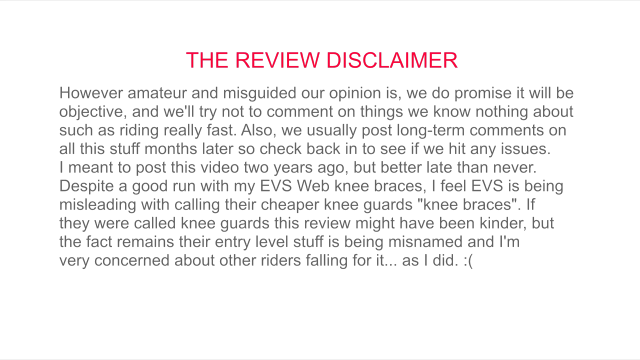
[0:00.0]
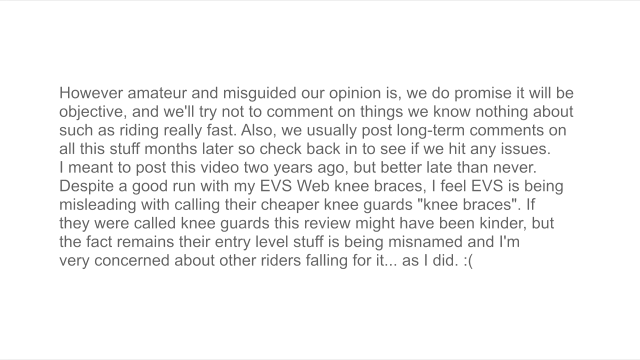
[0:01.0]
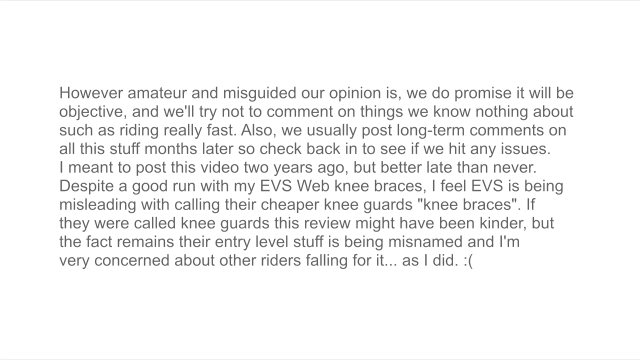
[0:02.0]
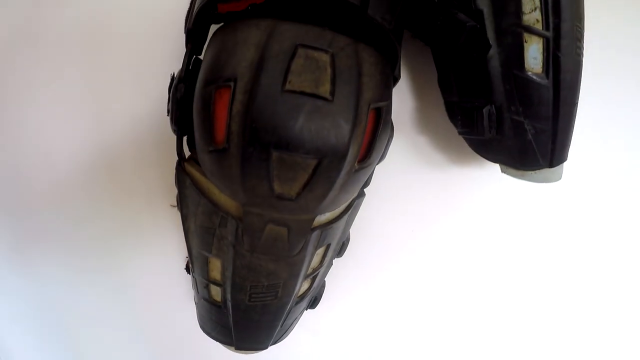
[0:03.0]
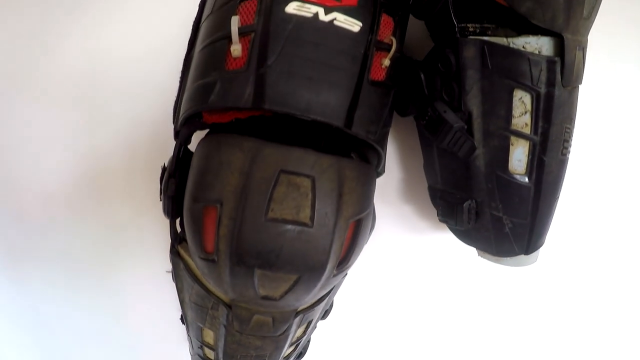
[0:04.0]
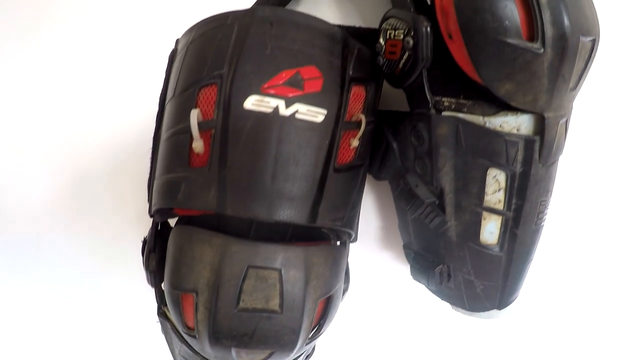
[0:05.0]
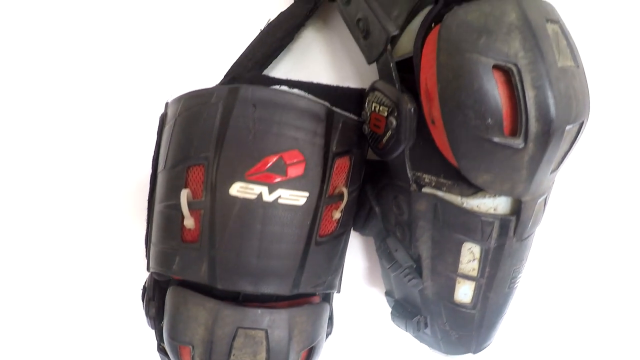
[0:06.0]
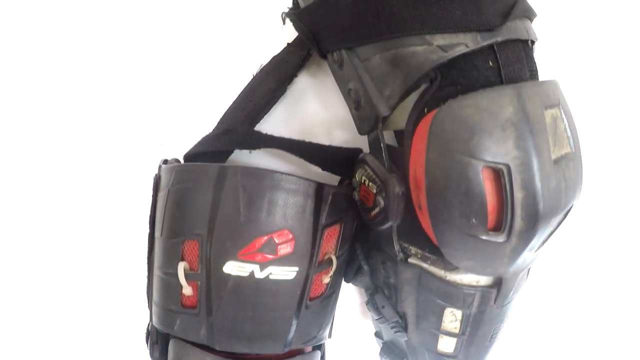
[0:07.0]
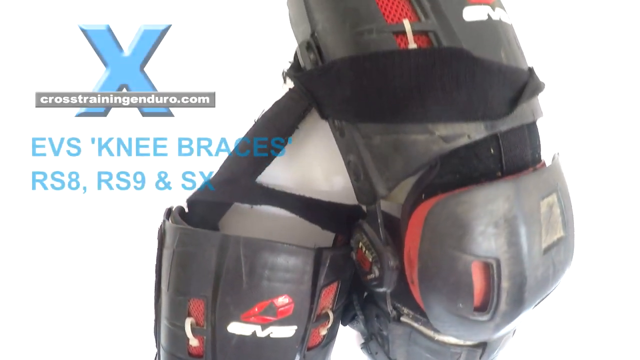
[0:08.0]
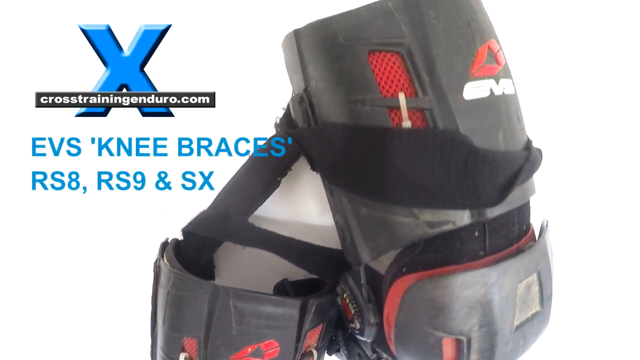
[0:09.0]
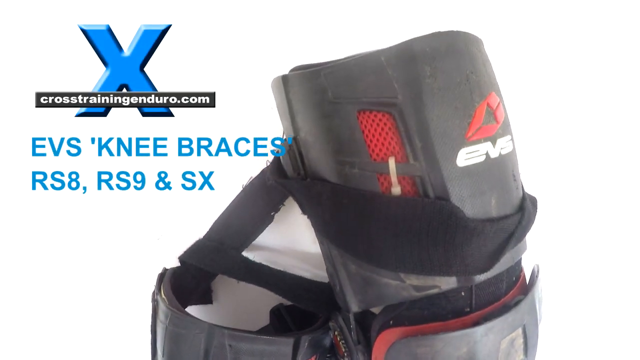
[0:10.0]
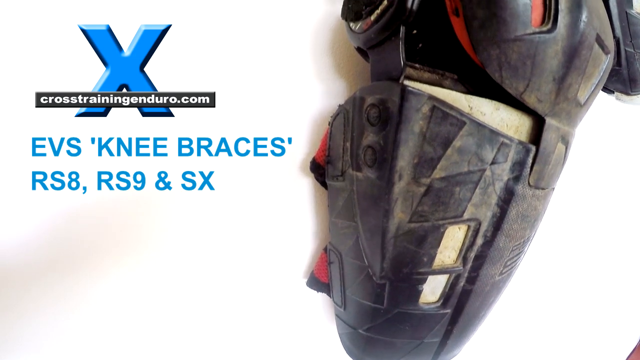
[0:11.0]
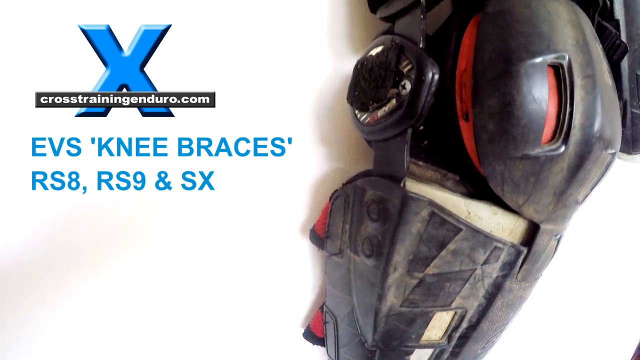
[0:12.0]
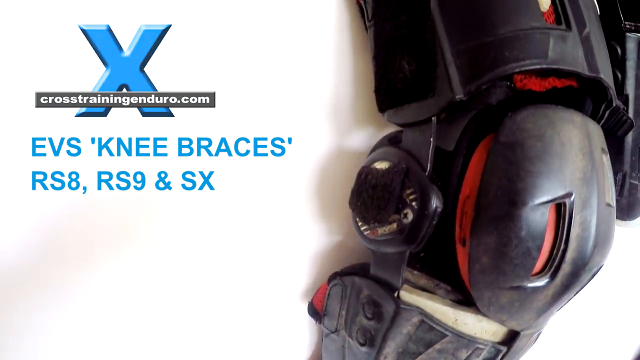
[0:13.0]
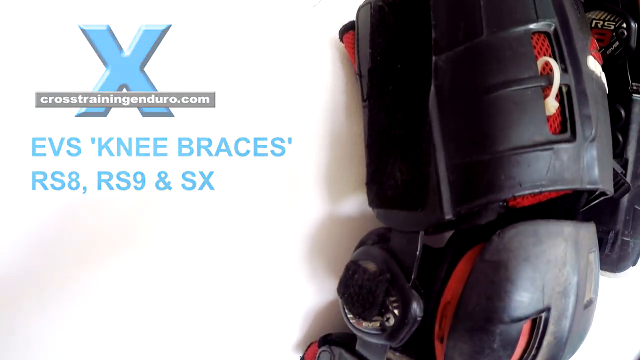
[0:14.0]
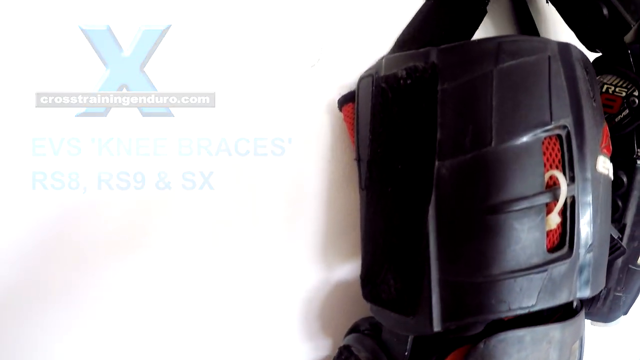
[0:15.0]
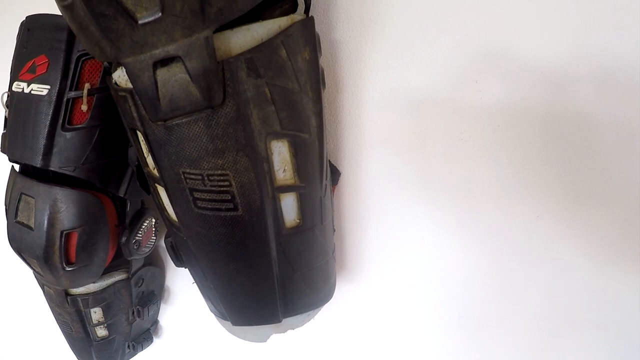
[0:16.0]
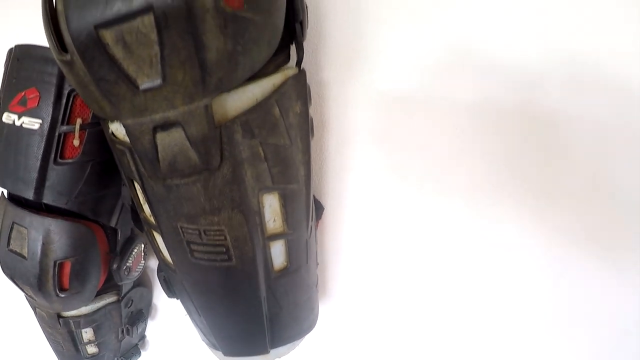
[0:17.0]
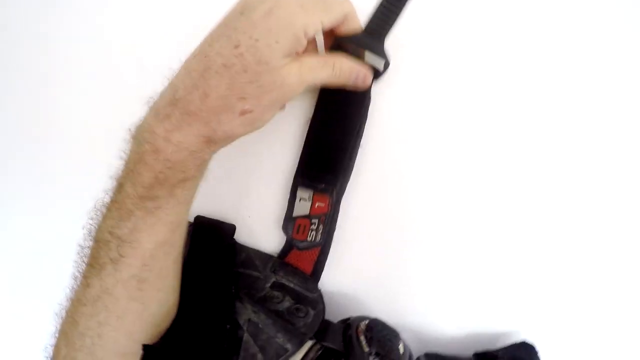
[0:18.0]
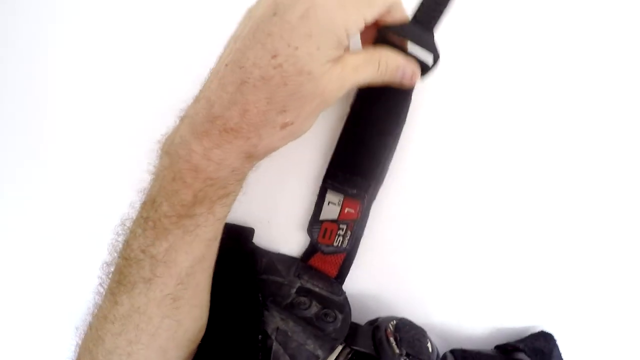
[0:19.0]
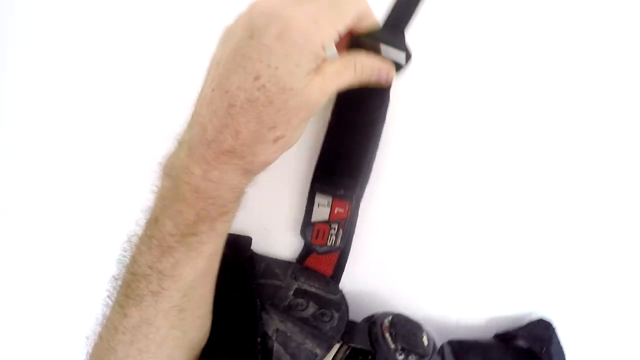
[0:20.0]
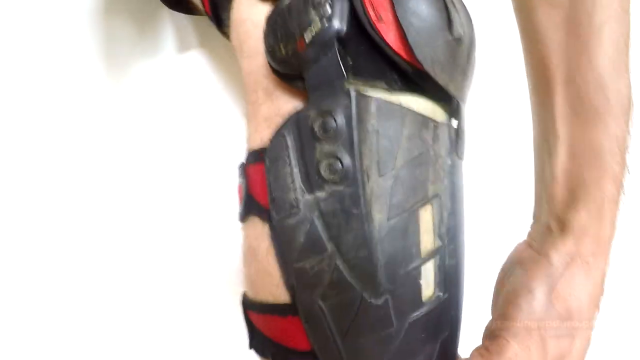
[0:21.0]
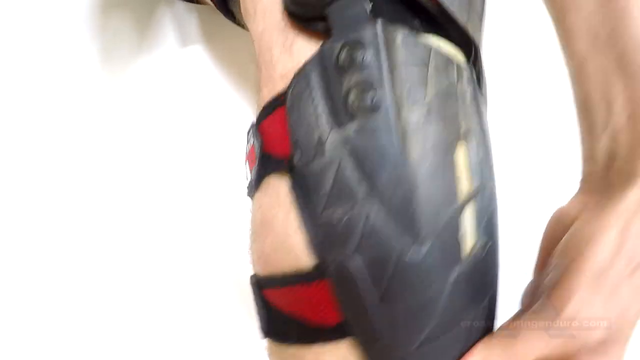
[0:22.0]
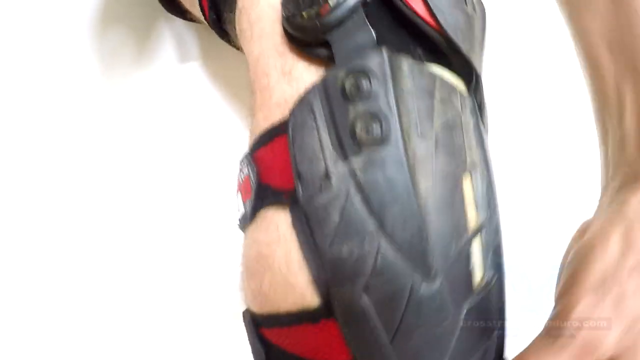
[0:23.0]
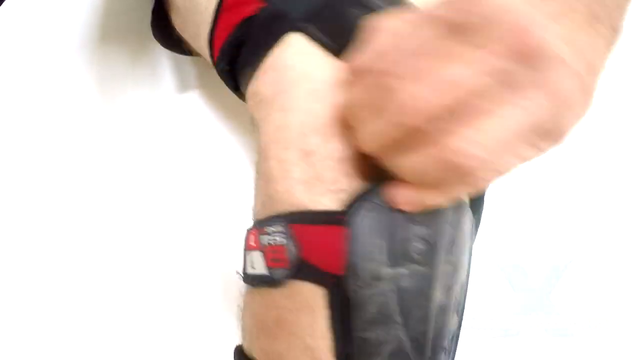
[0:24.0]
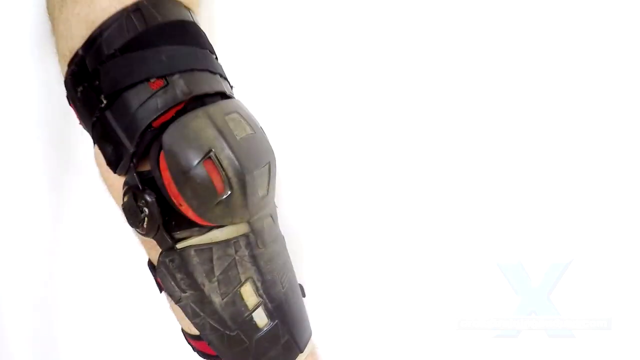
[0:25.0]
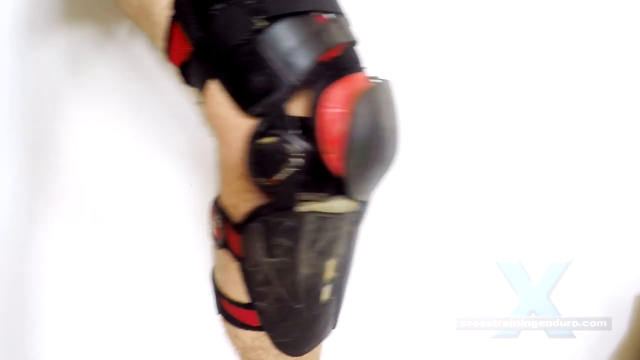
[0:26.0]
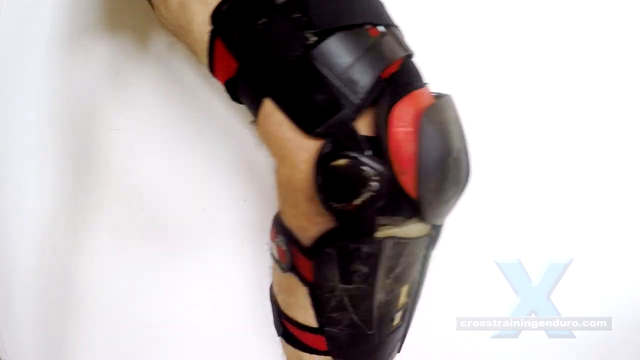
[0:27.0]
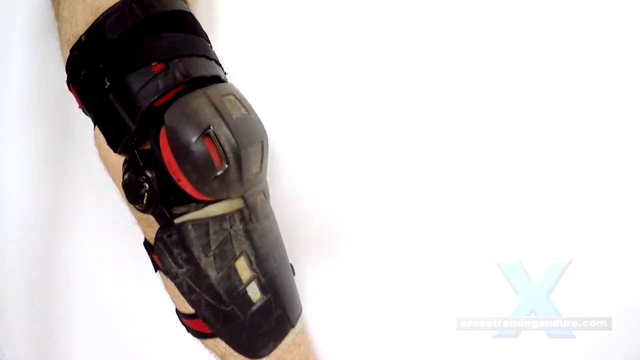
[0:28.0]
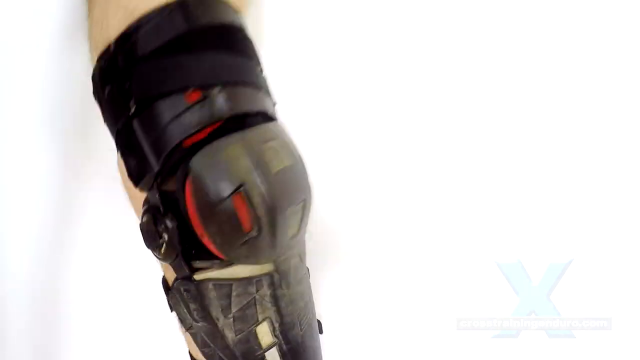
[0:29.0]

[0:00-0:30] A "REVIEW DISCLAIMER" heading appears in capital letters in red. Below it, text in black reads in part: "we promise it will be objective and we'll try not to comment on things we know nothing about, such as riding really fast." It continues: "so check back in to see if we hit any issues. I meant to post this video 2 years ago, but better late than never." Further text reads: "I feel EVS is being misleading with calling their cheaper knee guards, knee braces. If they were called knee guards, this review might have been kinder, but the fact remains their entry level stuff is being misnamed". A sad face made with a colon and an open bracket follows. The text is on a white background.